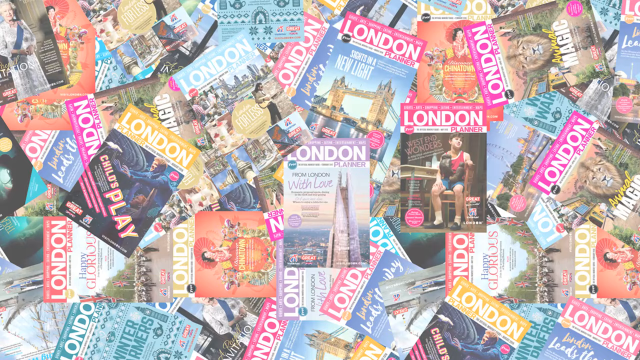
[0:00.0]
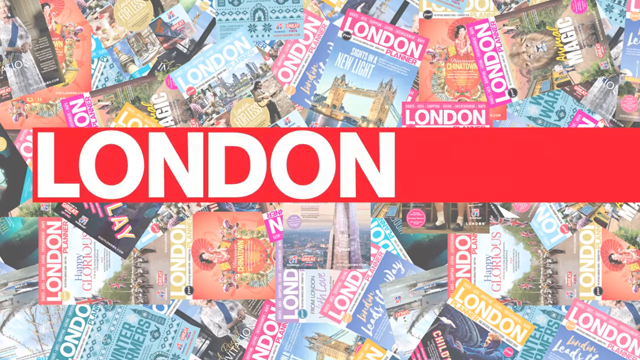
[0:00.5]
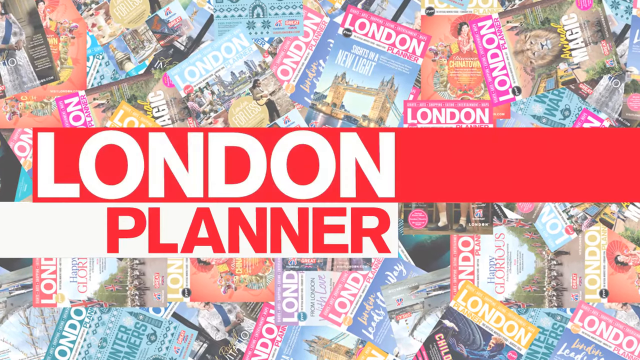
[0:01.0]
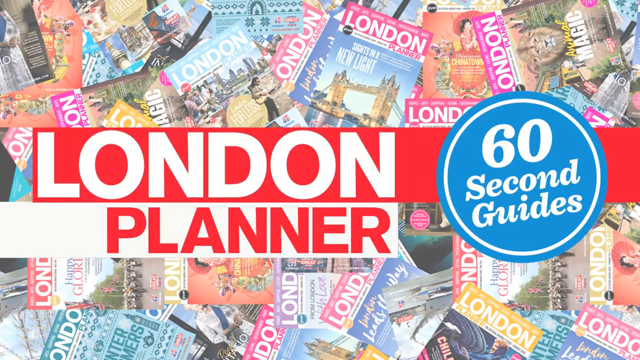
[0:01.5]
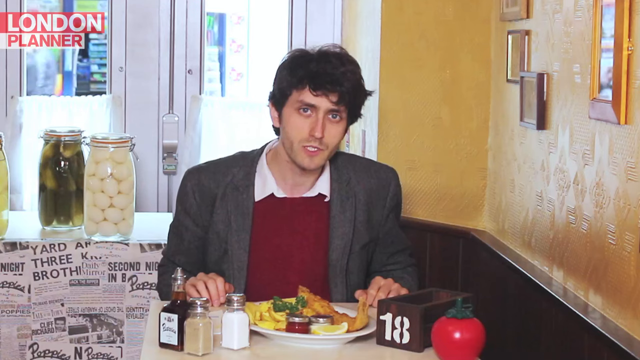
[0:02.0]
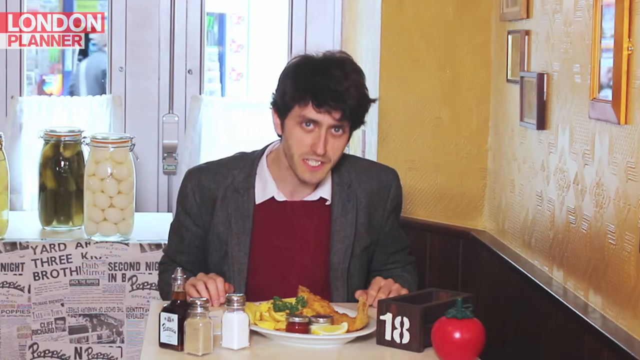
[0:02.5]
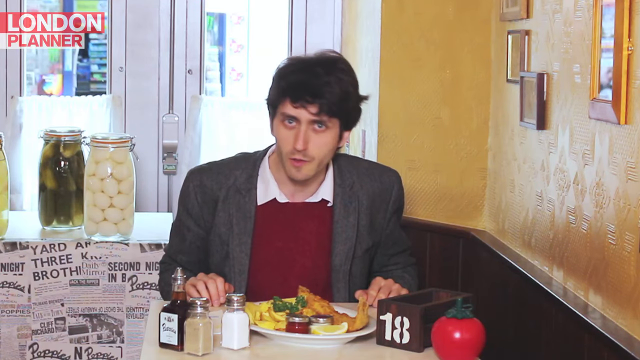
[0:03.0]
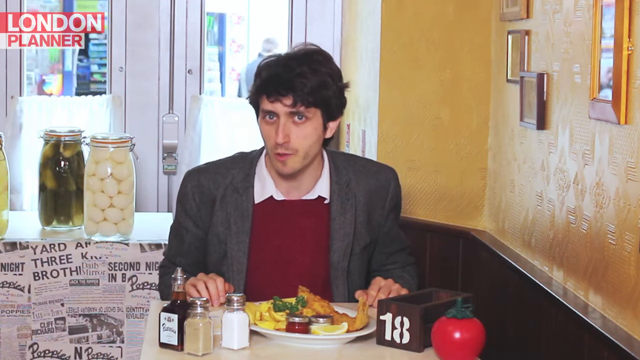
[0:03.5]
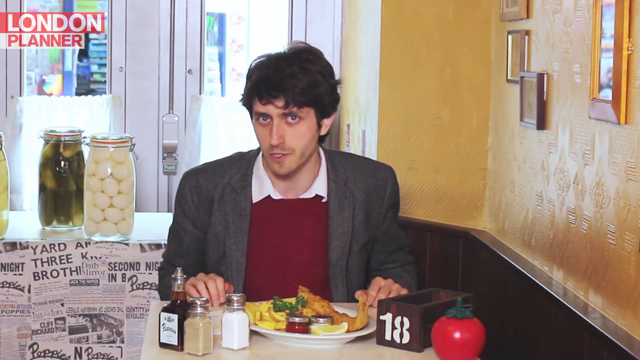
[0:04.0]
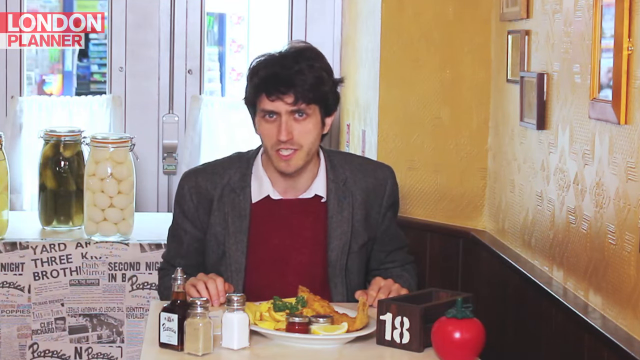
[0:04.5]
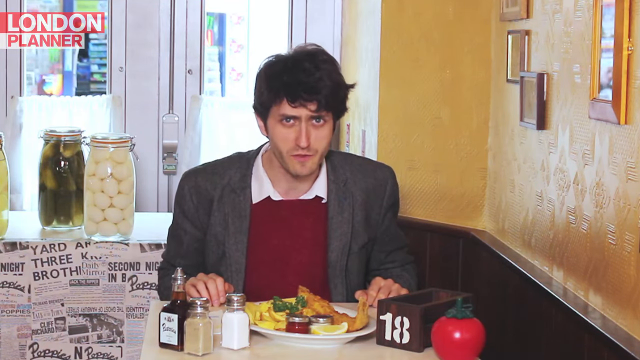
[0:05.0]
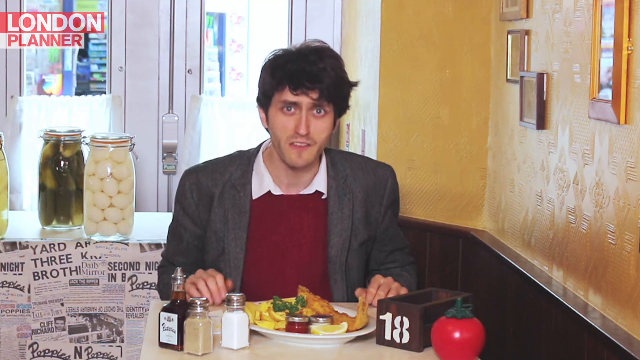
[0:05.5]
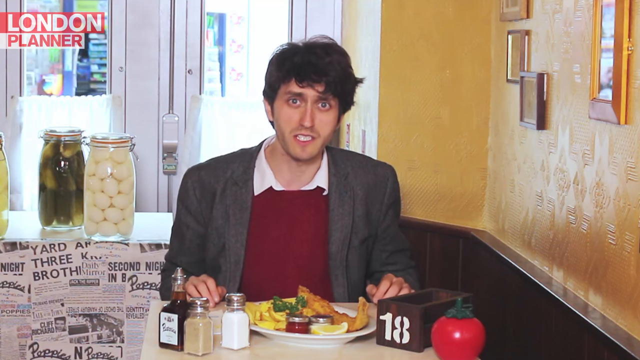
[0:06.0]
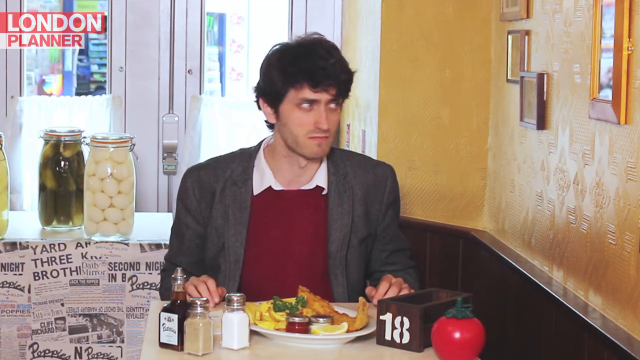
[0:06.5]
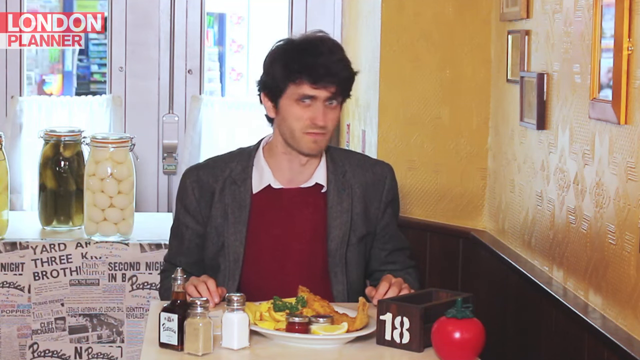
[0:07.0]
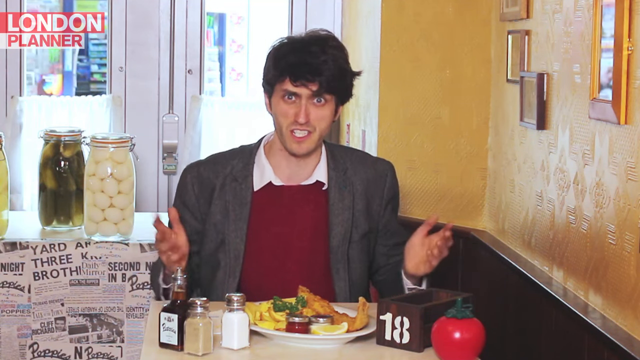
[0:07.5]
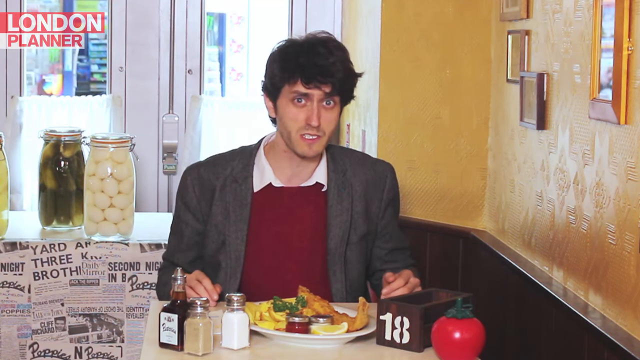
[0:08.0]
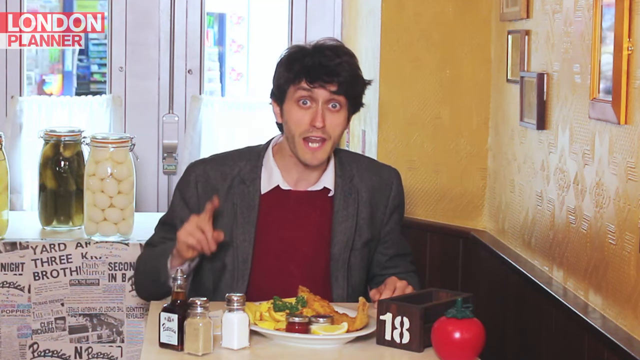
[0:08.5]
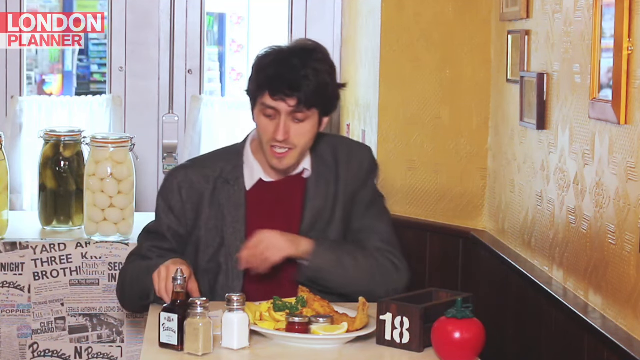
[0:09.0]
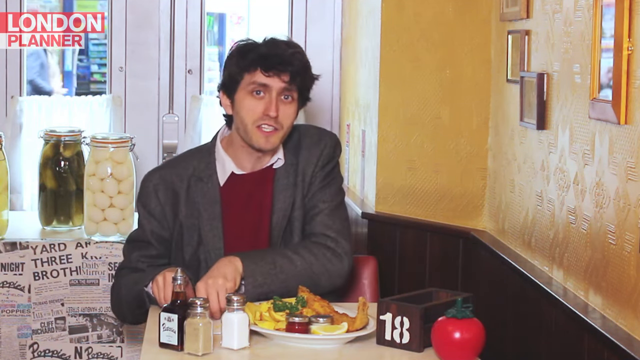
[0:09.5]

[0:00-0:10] The title "How to eat out in London" appears in white lettering overlaid in the upper left-hand corner. A man sits in a restaurant. He has long brown hair and bushy eyebrows and wears a white collared shirt, what looks like a red bib in front of the shirt, and a gray sports coat. In front of him is a plate full of what looks like fish and sticks, along with ketchup in a bottle and some lemon. There is a box with the number 18 on it, perhaps one that carries utensils. To the right is what looks to be some sort of ceramic vegetable, perhaps as decoration, and in front of him are salt and pepper and perhaps some red vinegar with a white label. Behind him is what looks to be a doorway, and he is sitting in cramped quarters. Behind him to his left are some translucent jars containing what looks like eggs and dill pickles. A London Planner sticker is in the back, or it is perhaps an overlay for a video series called London Planner.